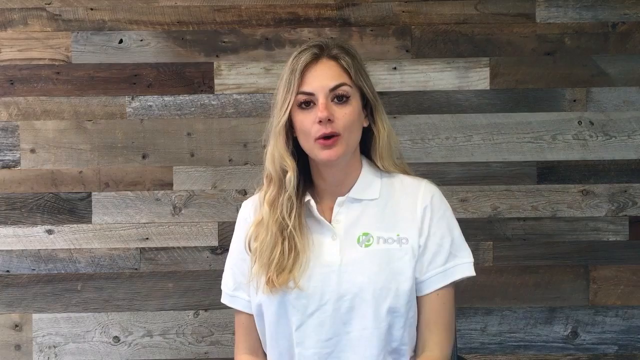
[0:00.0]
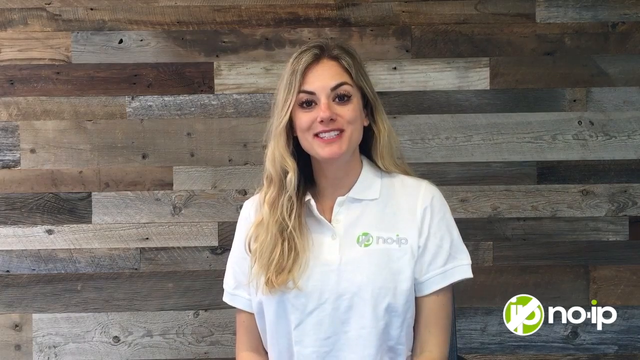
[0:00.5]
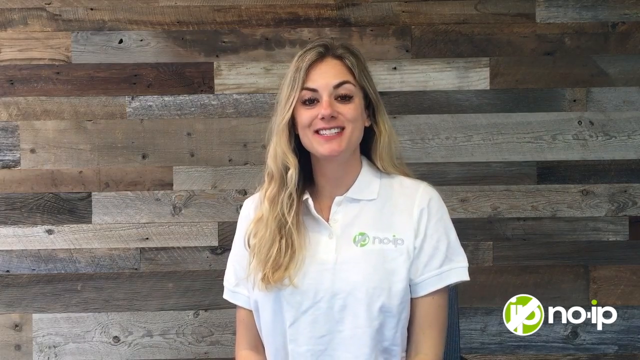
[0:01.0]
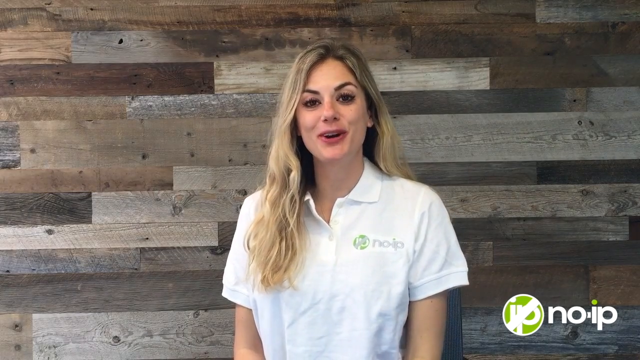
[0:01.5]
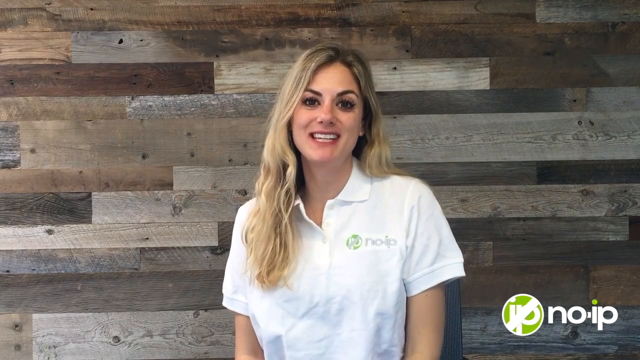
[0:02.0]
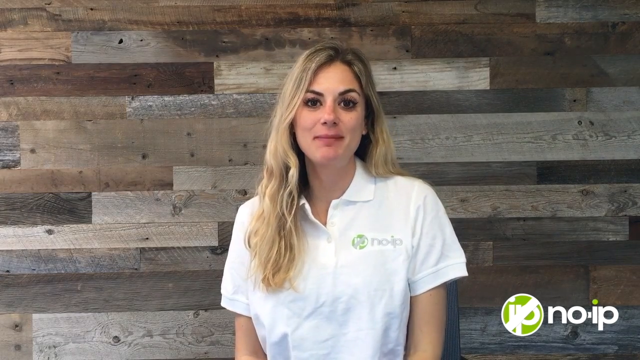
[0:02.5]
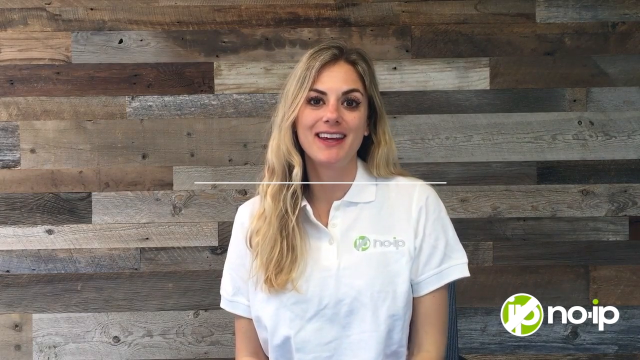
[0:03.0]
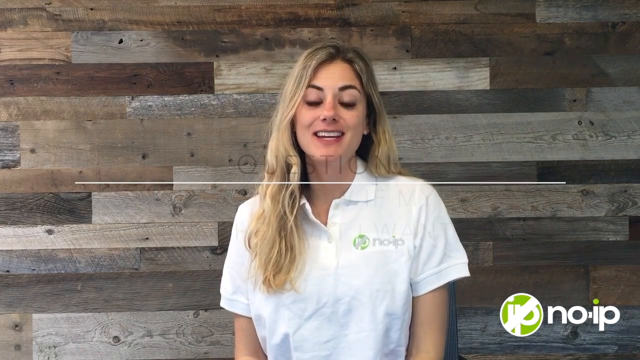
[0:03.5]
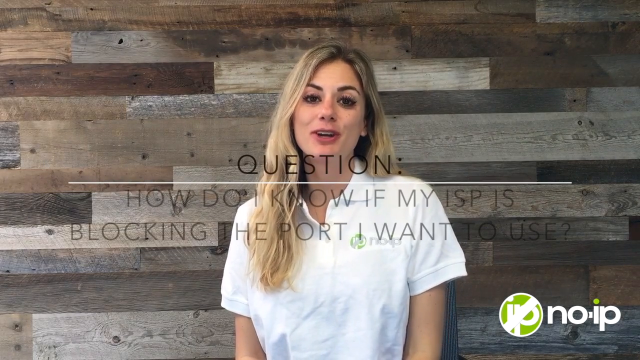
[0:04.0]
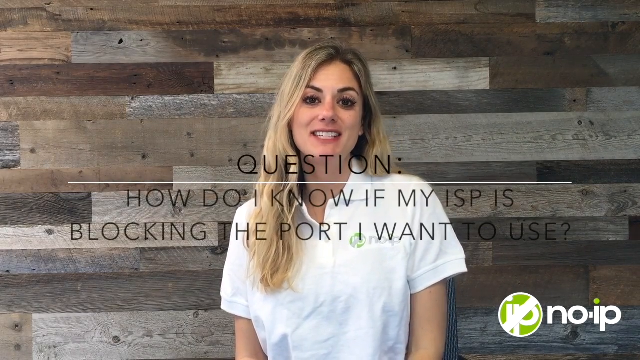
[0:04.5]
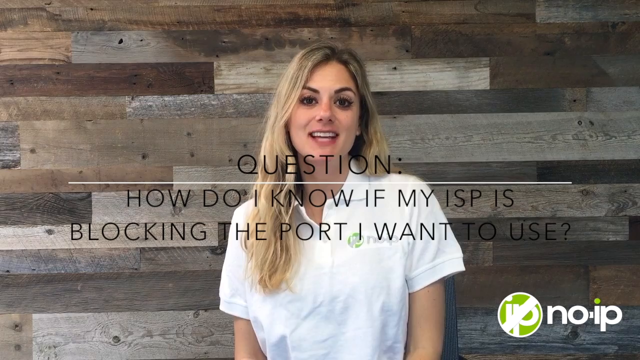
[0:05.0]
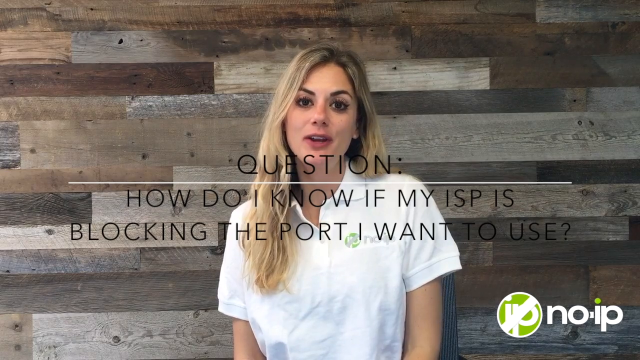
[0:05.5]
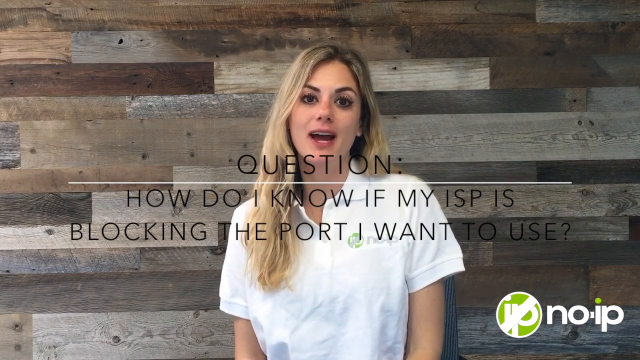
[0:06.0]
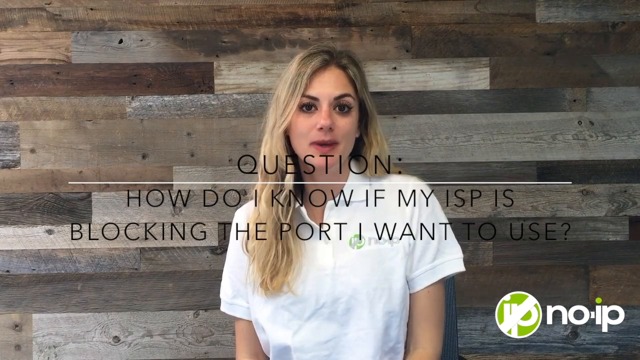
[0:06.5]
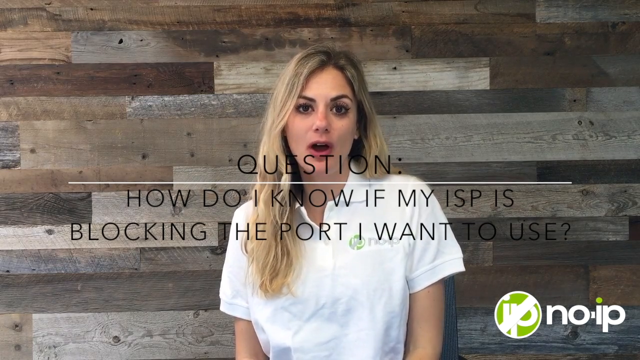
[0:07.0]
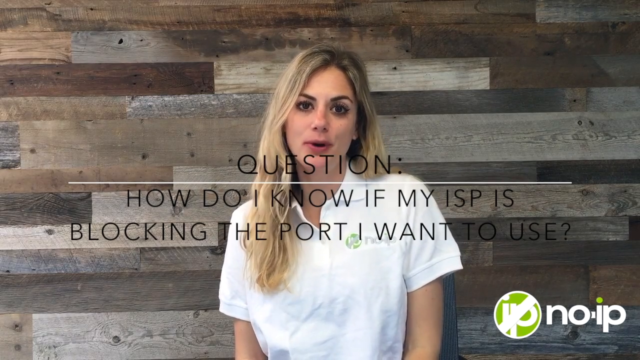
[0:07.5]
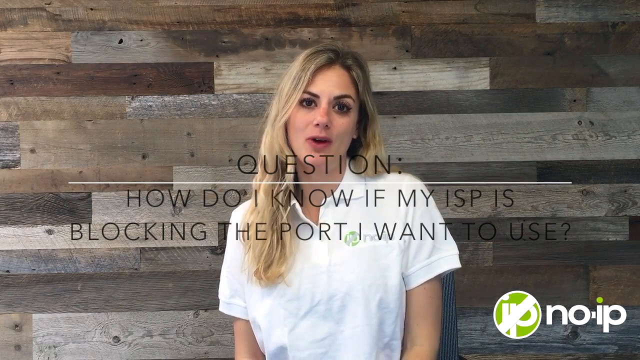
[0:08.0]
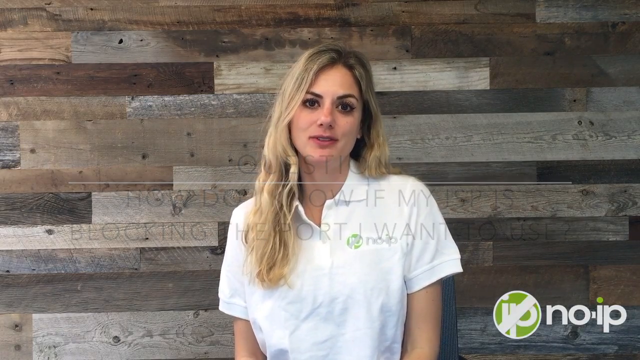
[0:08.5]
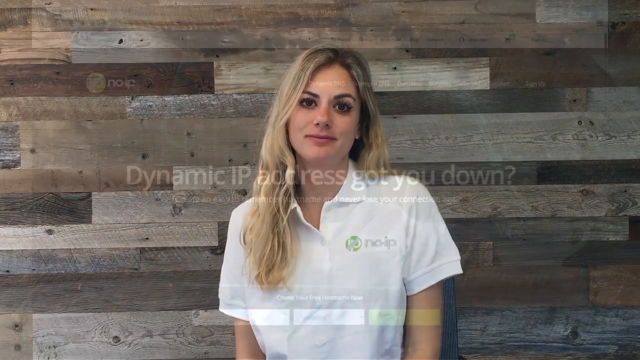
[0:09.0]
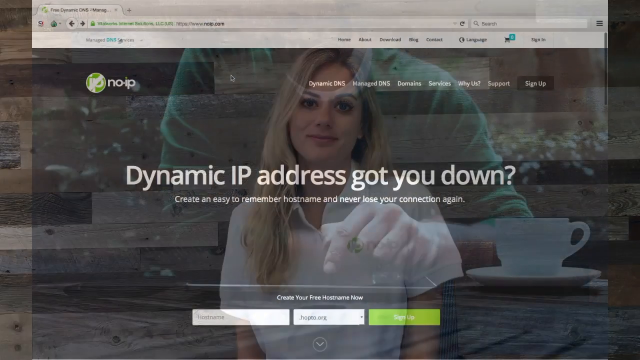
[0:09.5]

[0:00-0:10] A blonde woman, who looks maybe to be in her mid-thirties, is talking while standing in front of what looks like a wall made of wood planks. She wears a white polo shirt and looks very much like she works for a tech company. In front of her on the screen is "question:" with a white line underneath it, followed by the text "How do I know if my ISP is blocking the port I want to use?" In the bottom right corner of the screen is the No IP logo: green with a white diagonal line across it and the words "no IP". It matches the logo and wording on her shirt.